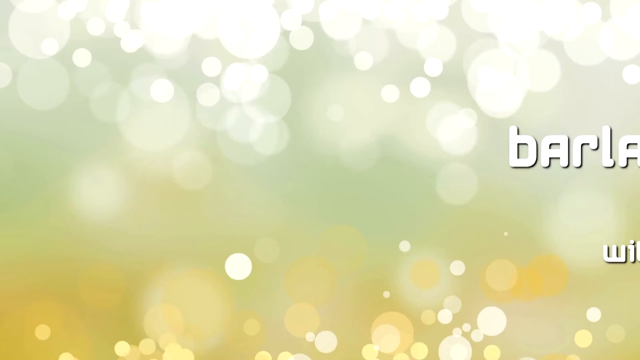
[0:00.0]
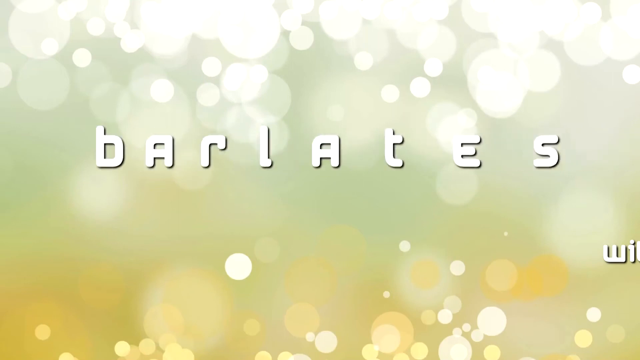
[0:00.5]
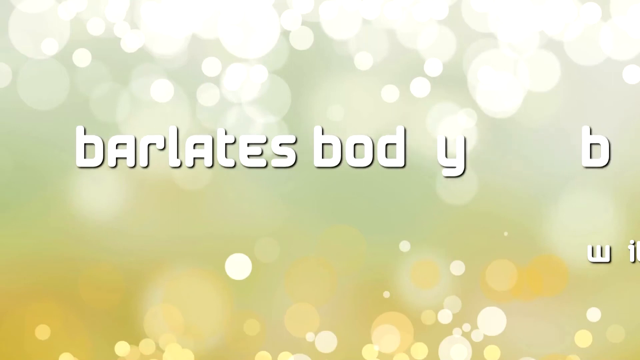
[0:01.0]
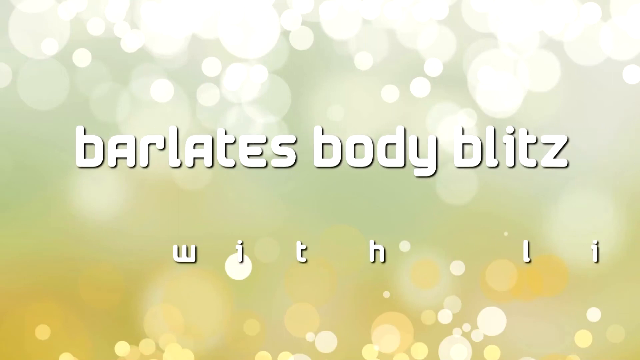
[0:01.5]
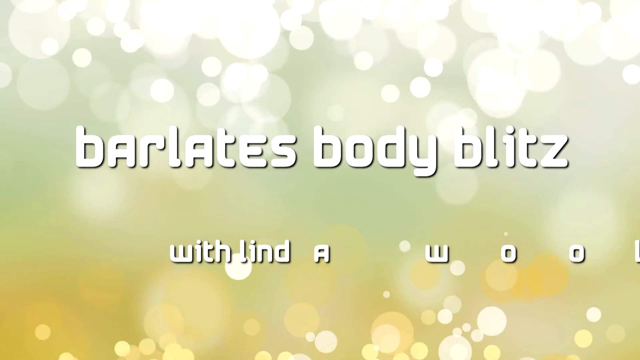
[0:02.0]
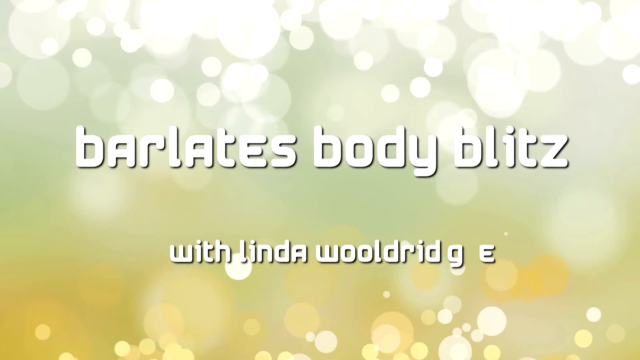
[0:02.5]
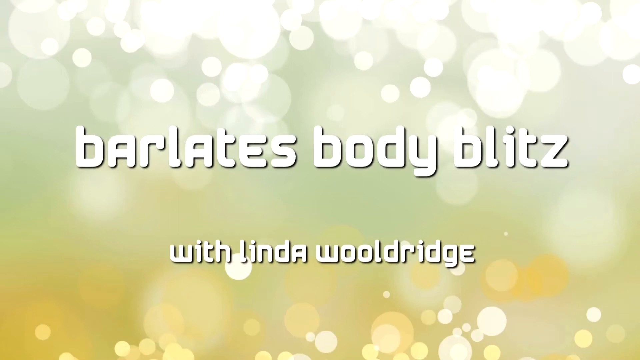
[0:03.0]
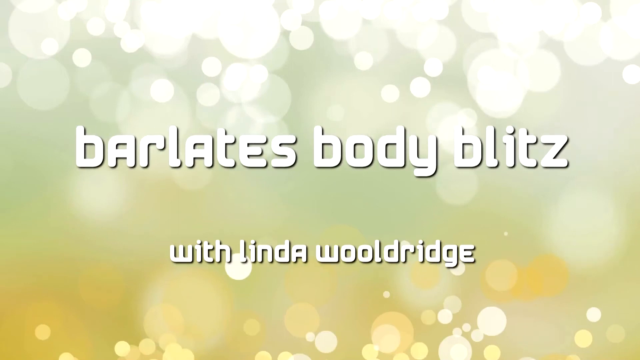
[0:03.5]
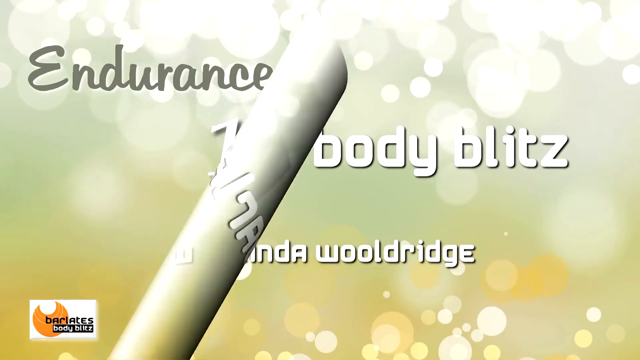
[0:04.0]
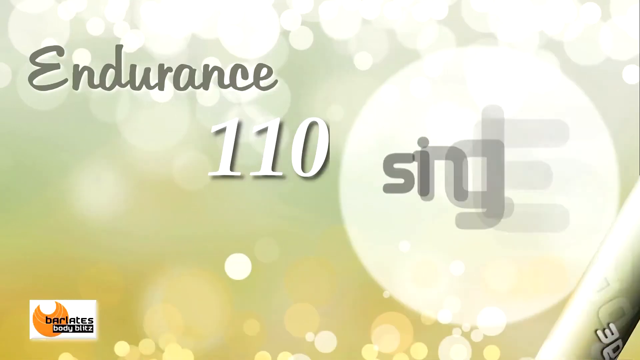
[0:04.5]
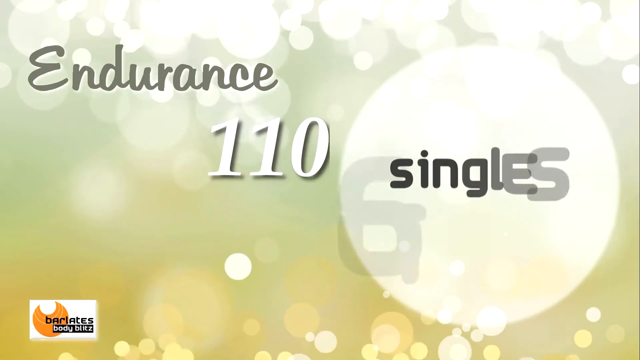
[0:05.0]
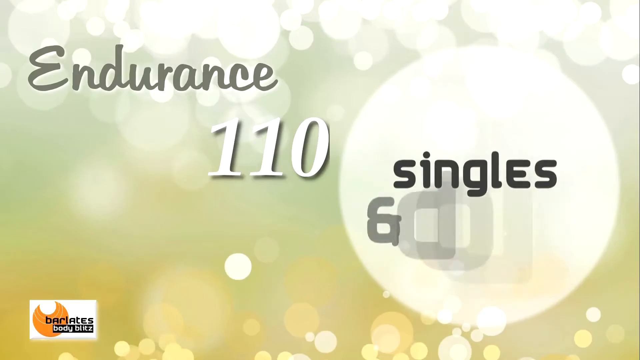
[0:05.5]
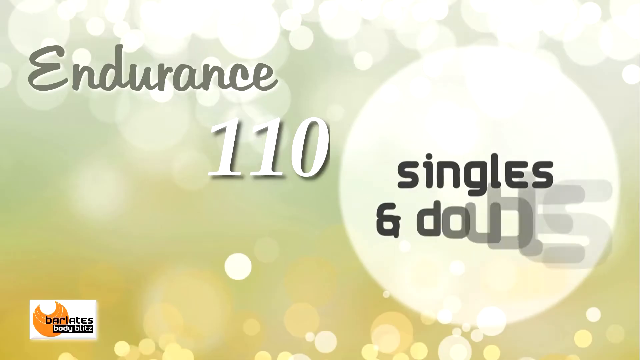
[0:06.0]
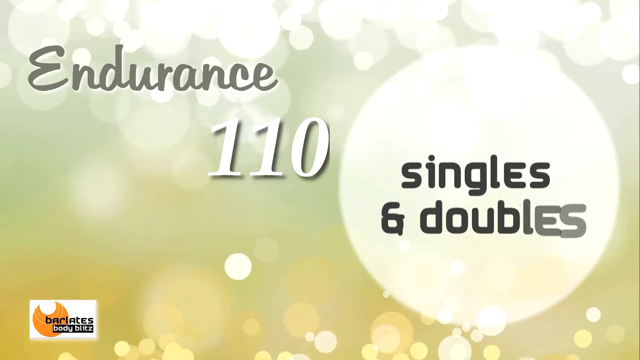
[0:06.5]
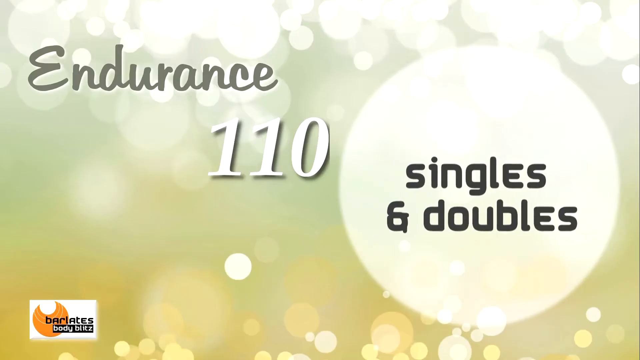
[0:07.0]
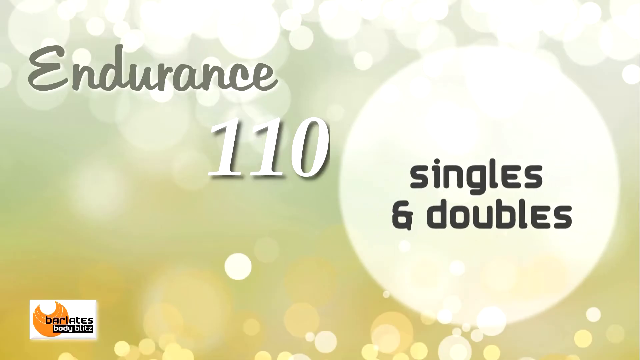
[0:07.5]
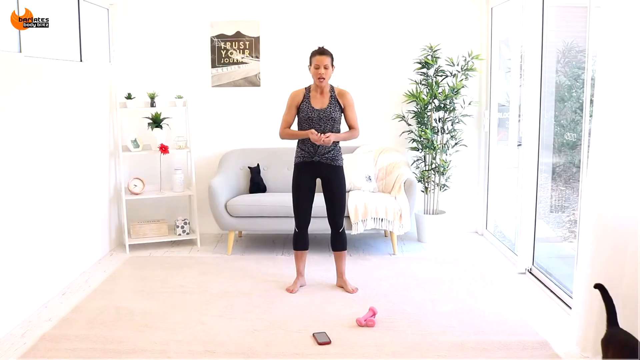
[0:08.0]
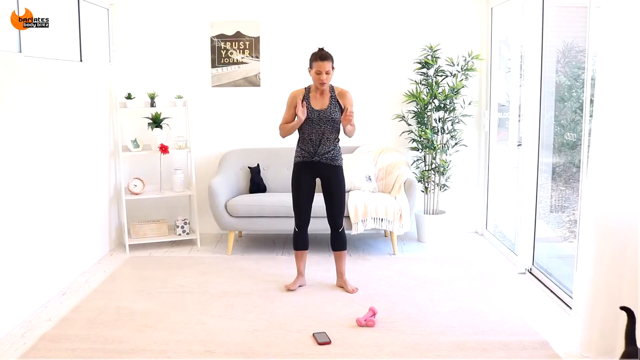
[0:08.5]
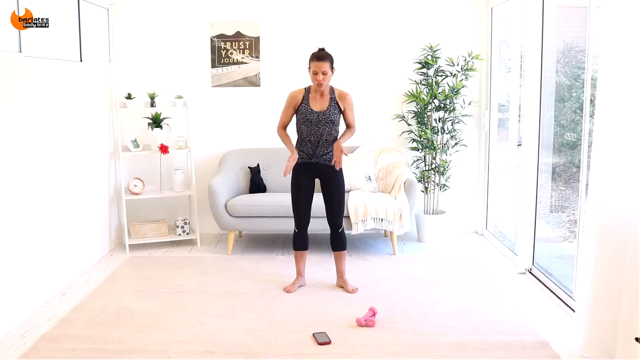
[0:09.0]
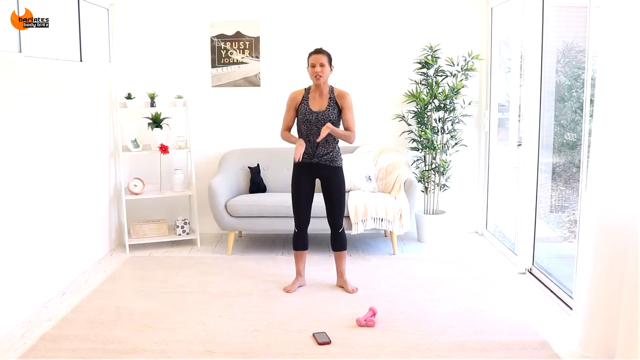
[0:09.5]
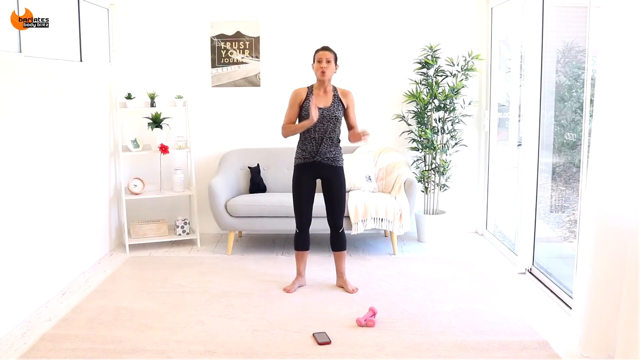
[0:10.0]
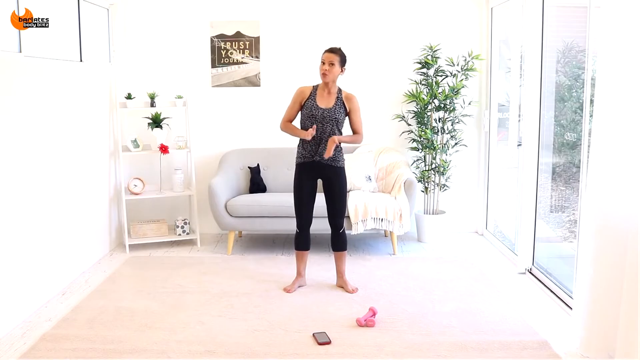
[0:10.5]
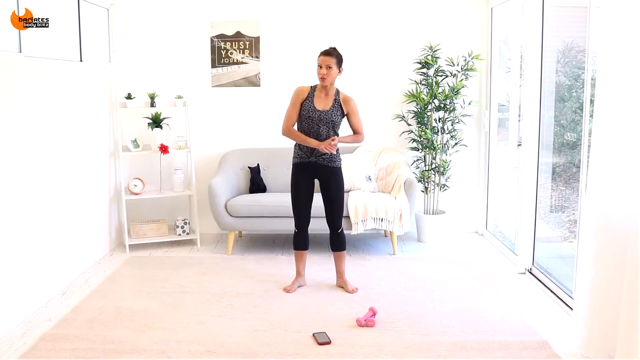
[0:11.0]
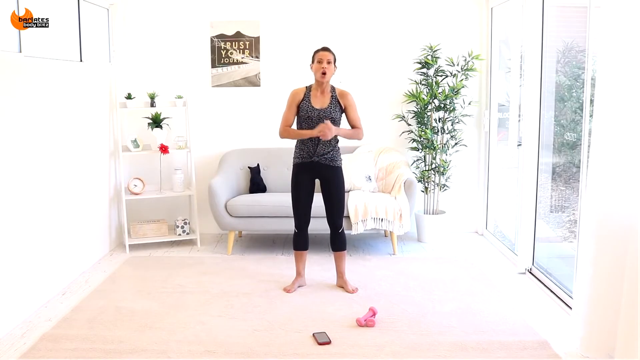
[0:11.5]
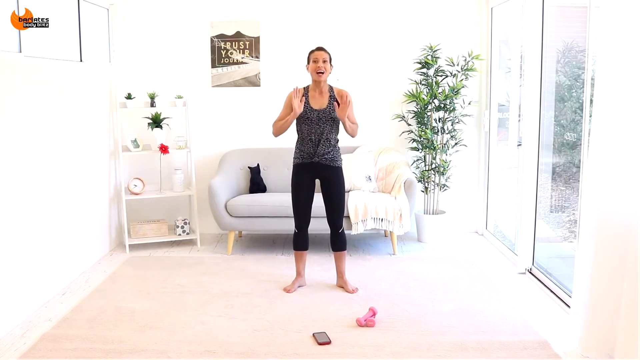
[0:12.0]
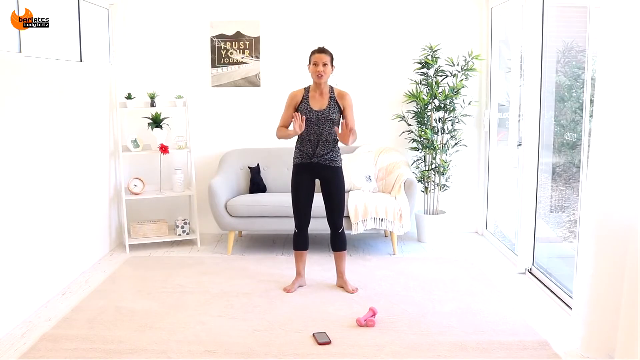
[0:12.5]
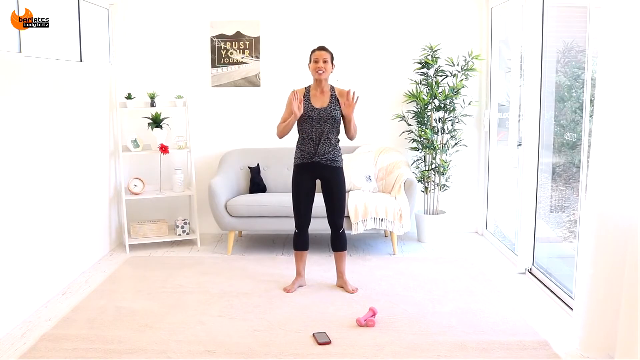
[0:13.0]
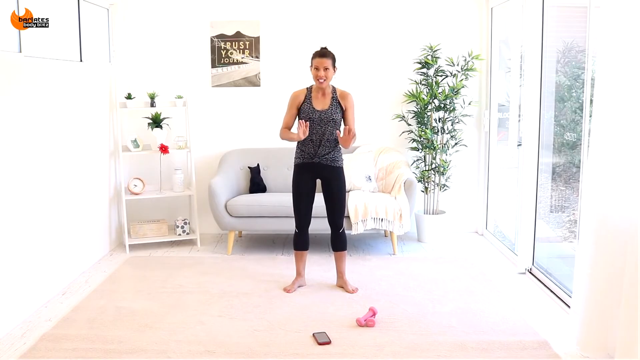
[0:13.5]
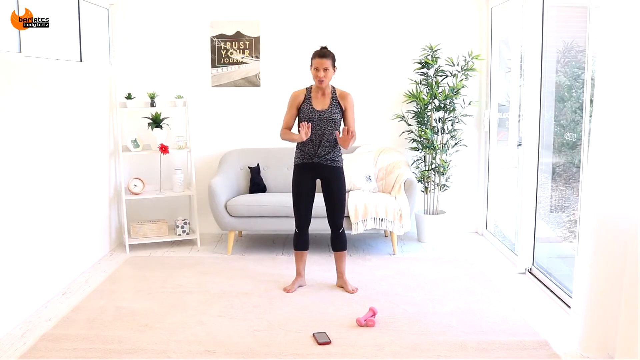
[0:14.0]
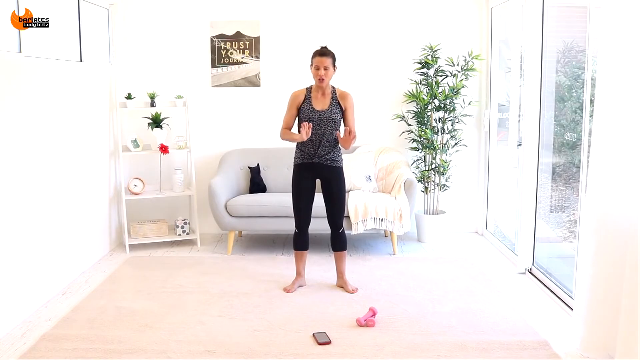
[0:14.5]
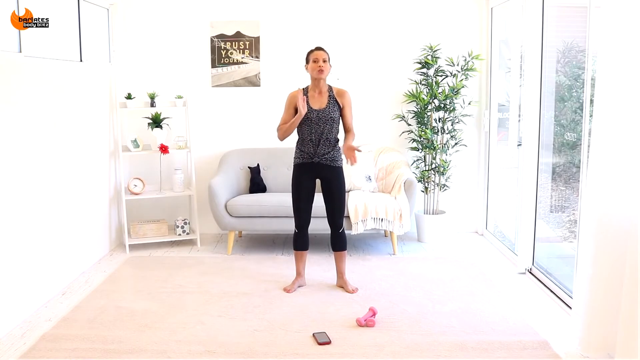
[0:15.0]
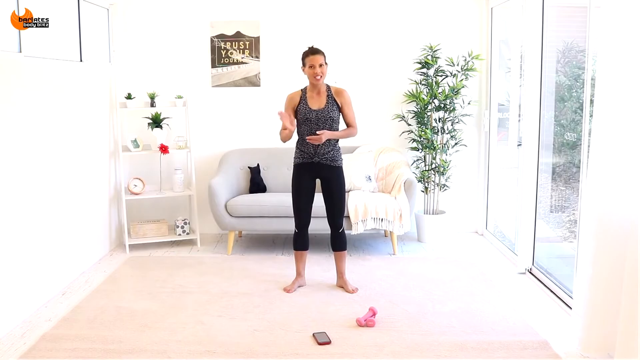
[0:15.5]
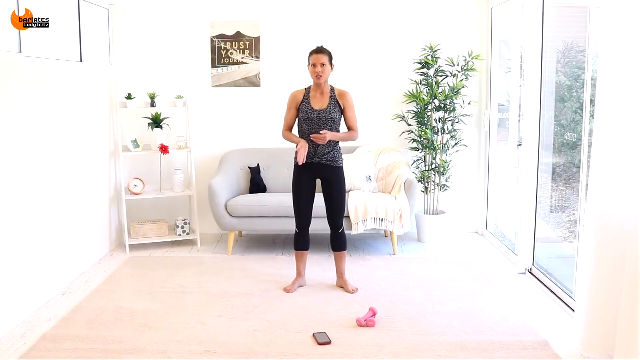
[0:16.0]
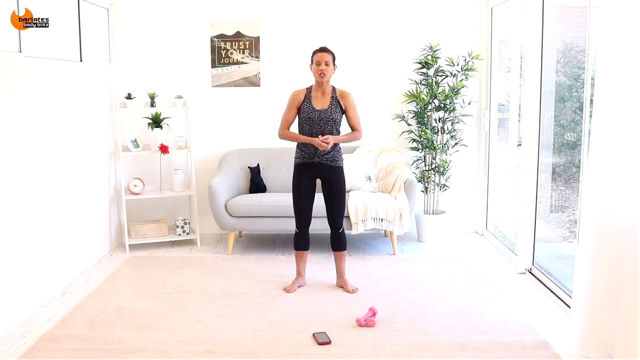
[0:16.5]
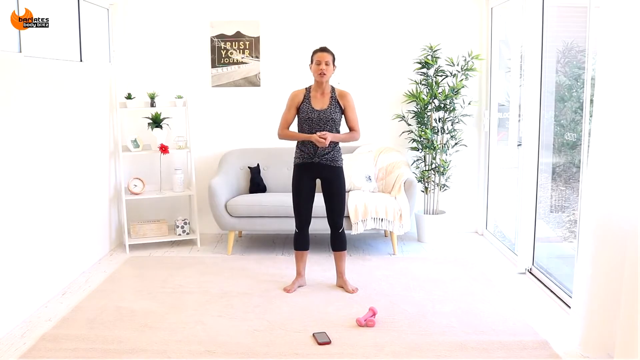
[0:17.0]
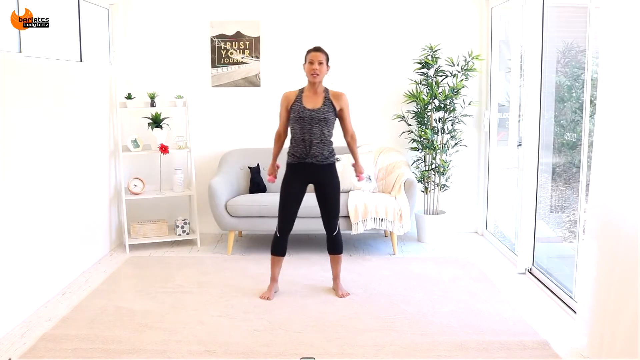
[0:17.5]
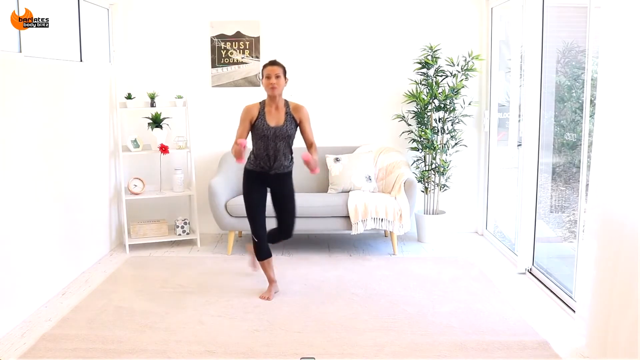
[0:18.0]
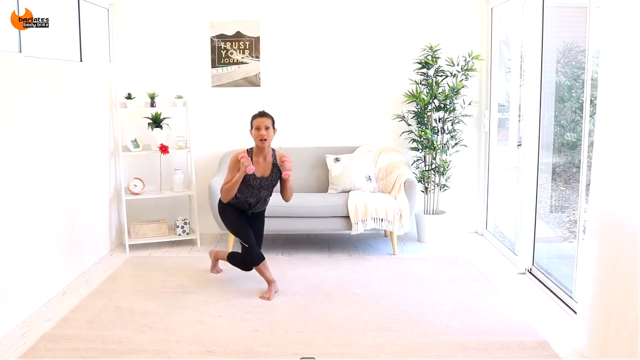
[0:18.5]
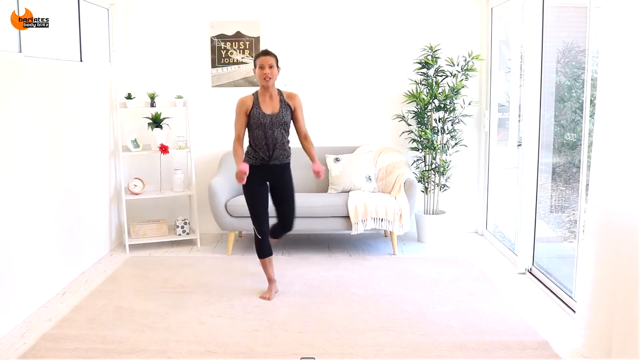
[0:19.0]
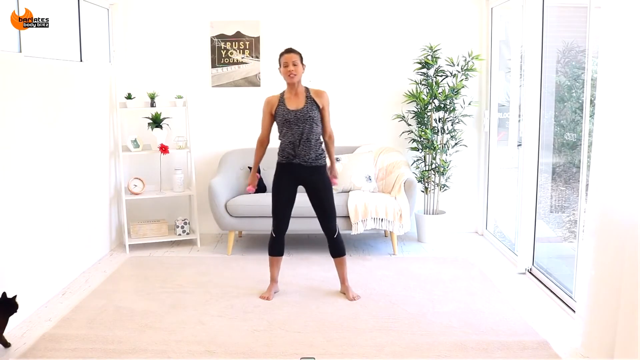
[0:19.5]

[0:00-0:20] White words come in from the right of the screen over a whitish-green-yellow background, reading "Barlotti's Body Blitz," followed by the name of the instructor for what appears to be an exercise video. More words then pop up giving the name of the class, "Endurance 110," and a larger white circle shows the words "singles and doubles" in black lettering. Once the words disappear, the scene moves into a bright, welcoming, small room with windows or some type of sliding glass door on one side. There are a couple of plants and a poster on the back wall, and in the center of the room is a woman wearing what appears to be exercise clothing. She is talking, apparently giving an introduction and directions for the class. When she finishes, she holds two pink weights and does a side lunge in which she crosses one leg behind the other. A black cat then starts walking into the scene from the bottom left corner.